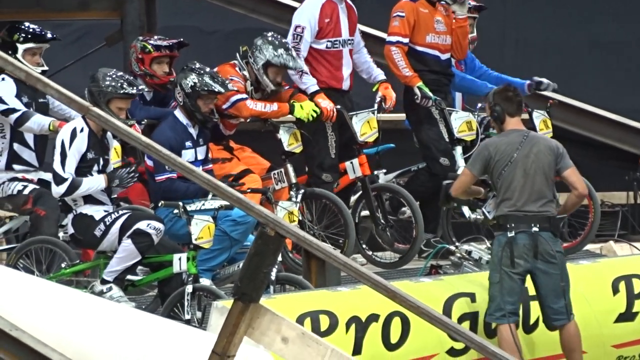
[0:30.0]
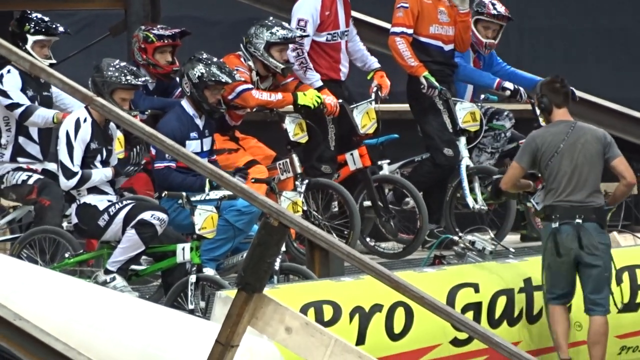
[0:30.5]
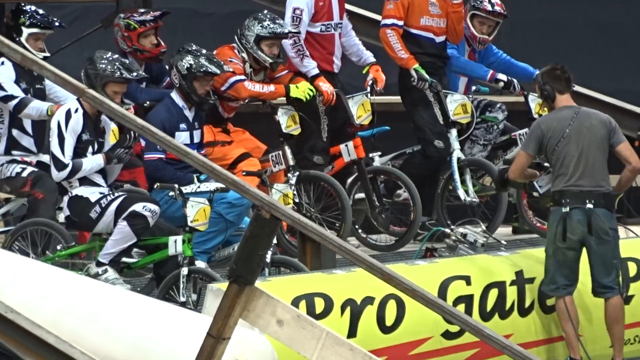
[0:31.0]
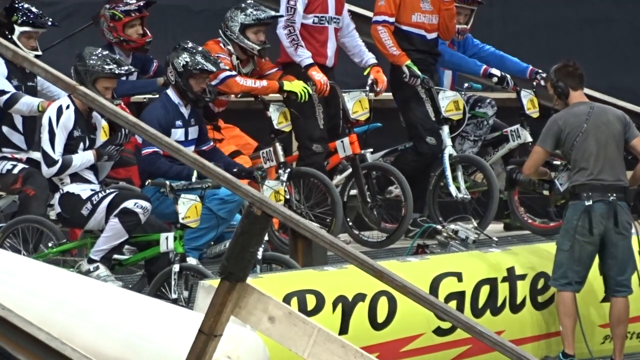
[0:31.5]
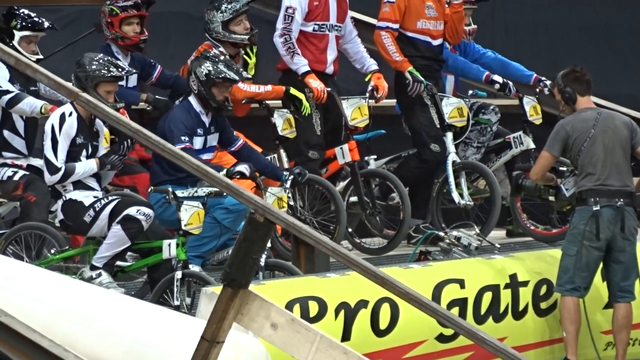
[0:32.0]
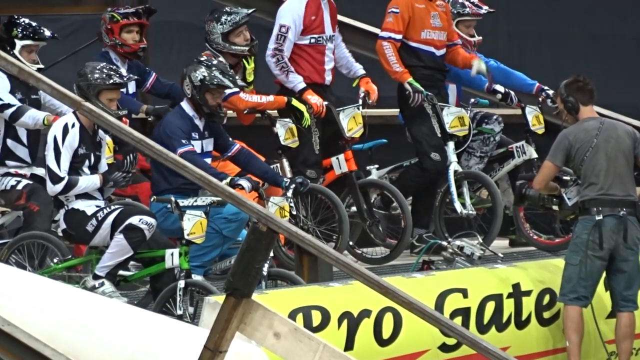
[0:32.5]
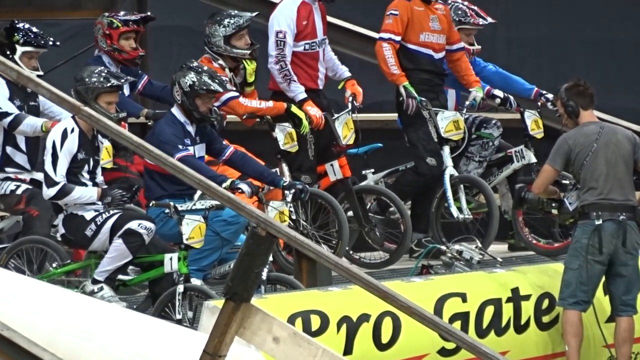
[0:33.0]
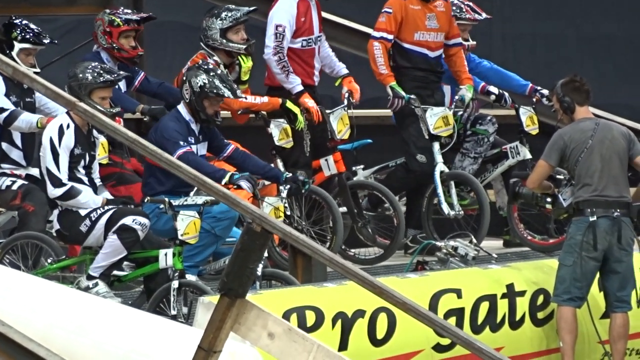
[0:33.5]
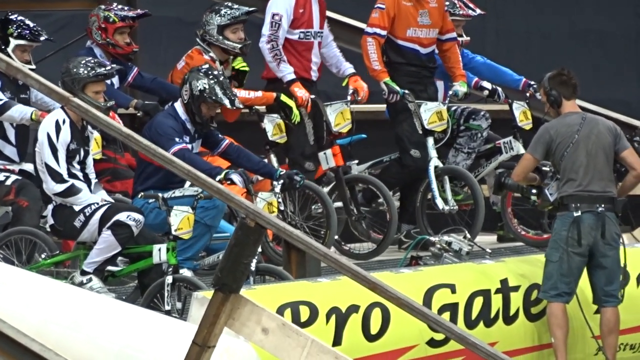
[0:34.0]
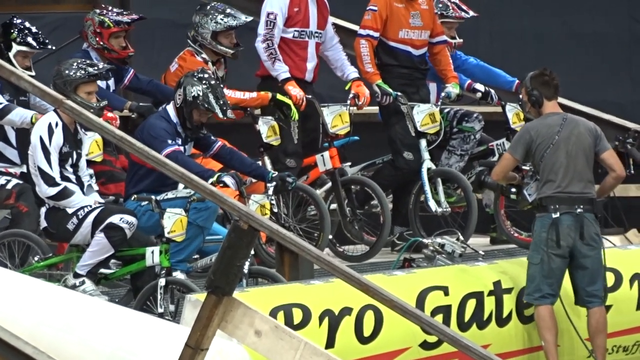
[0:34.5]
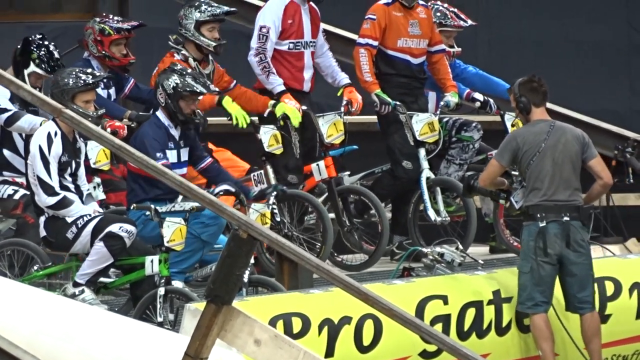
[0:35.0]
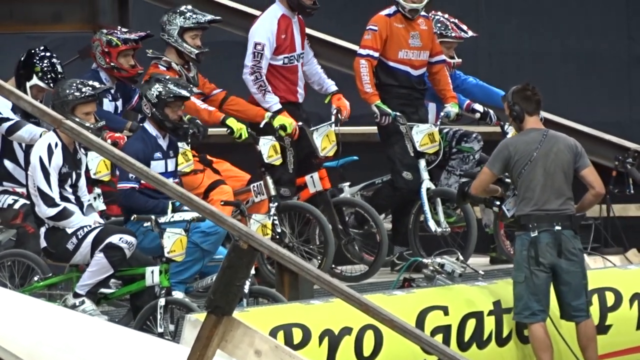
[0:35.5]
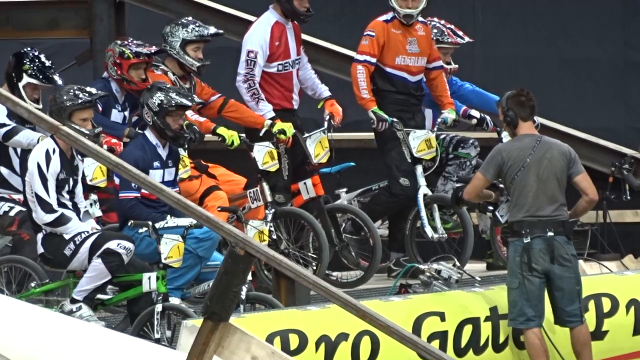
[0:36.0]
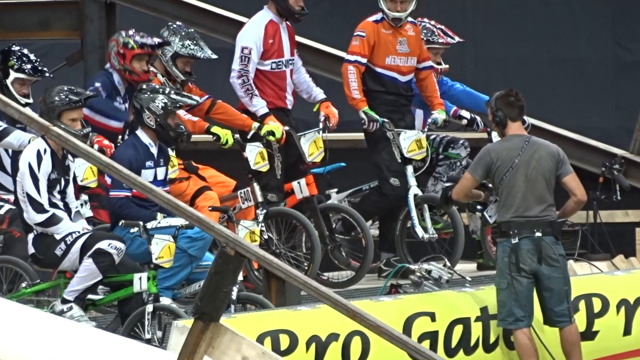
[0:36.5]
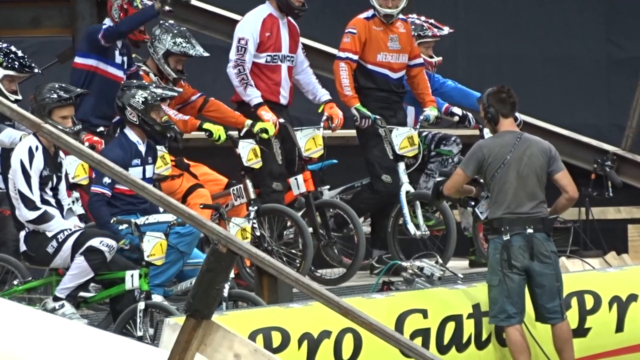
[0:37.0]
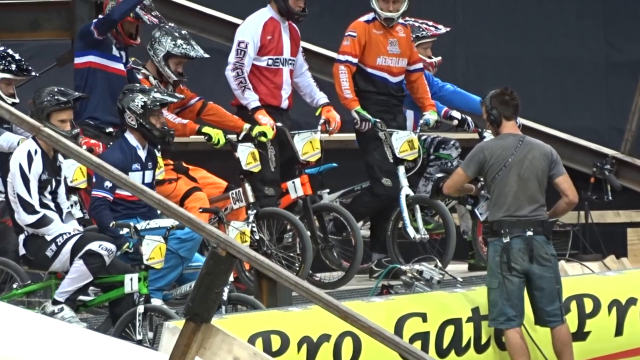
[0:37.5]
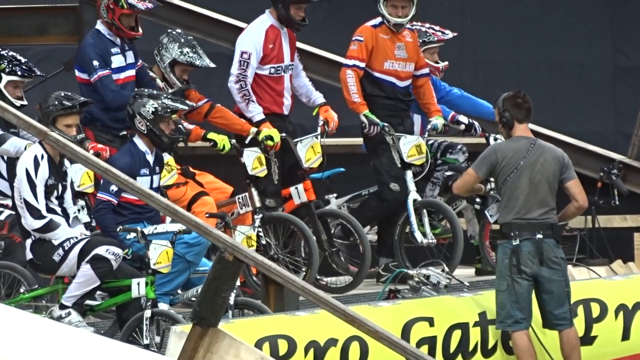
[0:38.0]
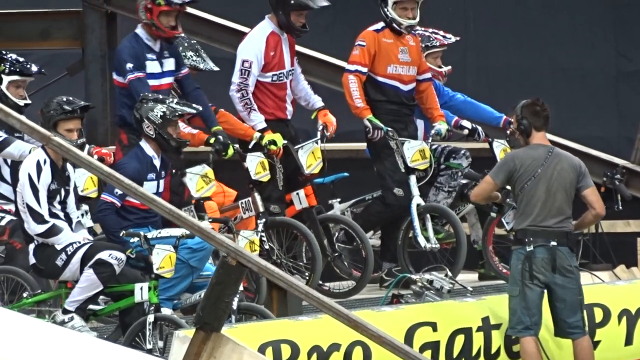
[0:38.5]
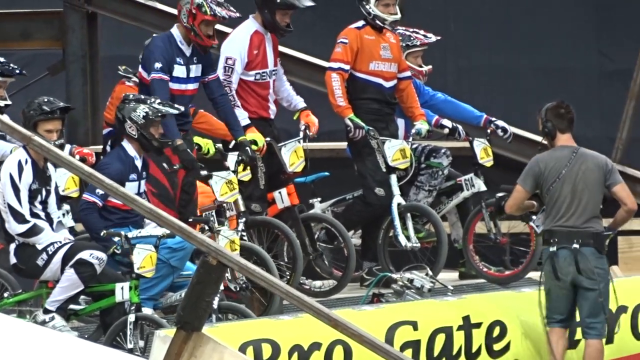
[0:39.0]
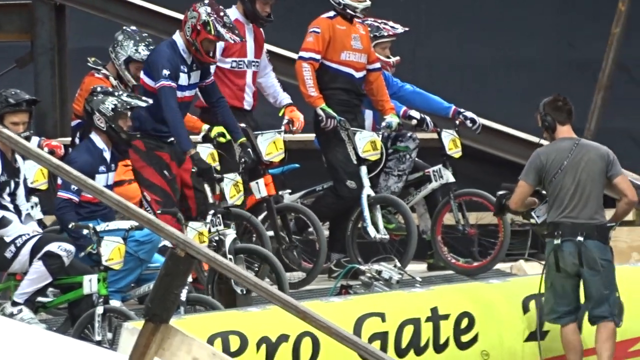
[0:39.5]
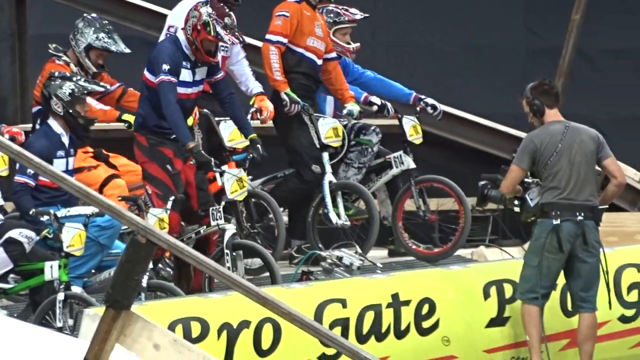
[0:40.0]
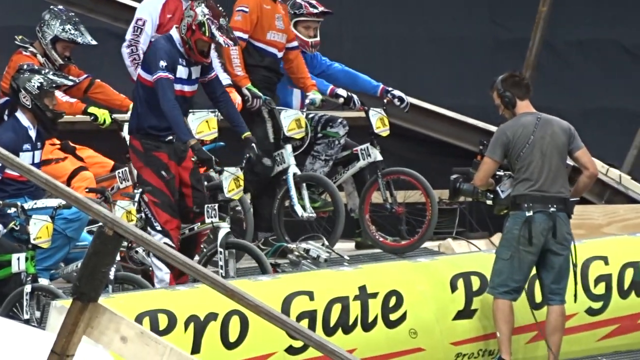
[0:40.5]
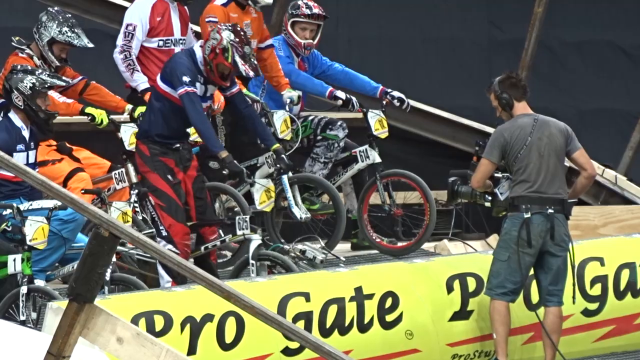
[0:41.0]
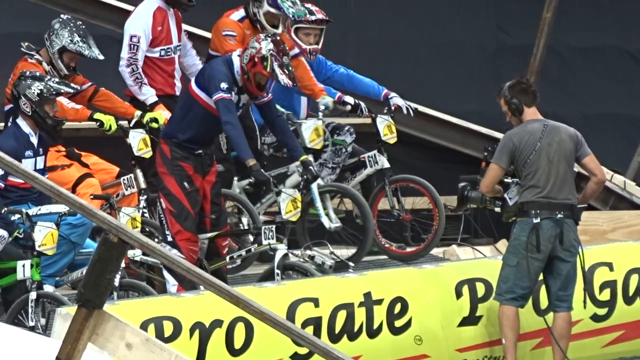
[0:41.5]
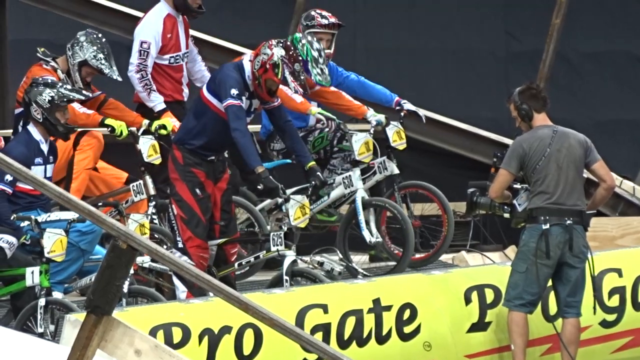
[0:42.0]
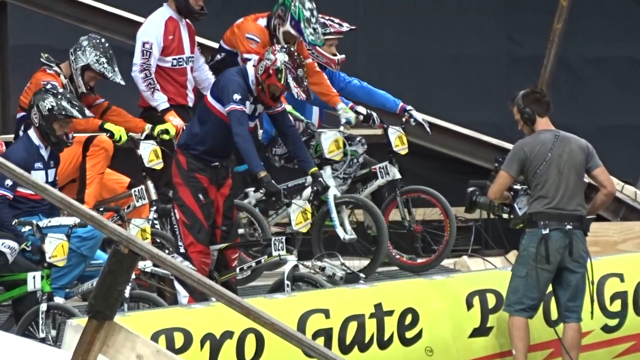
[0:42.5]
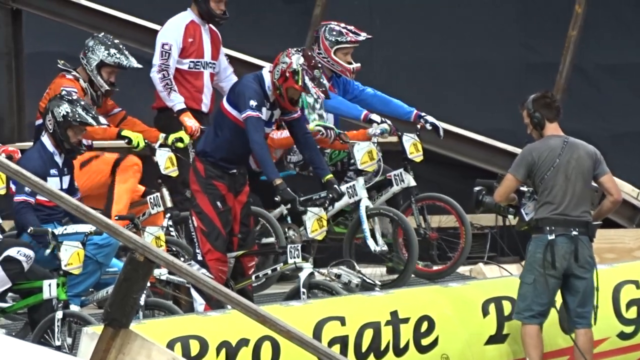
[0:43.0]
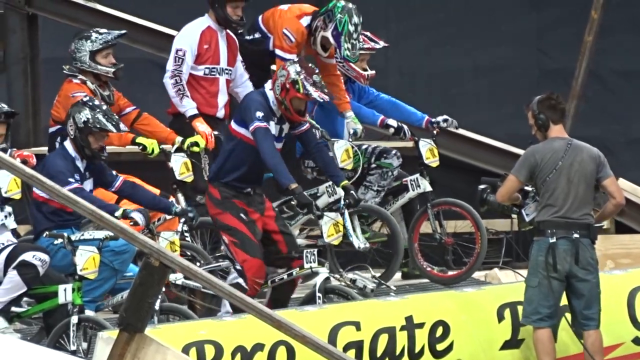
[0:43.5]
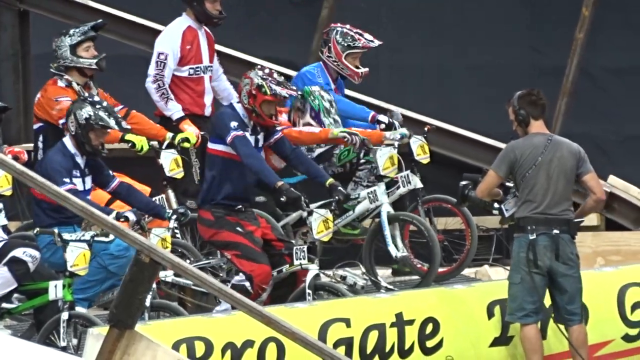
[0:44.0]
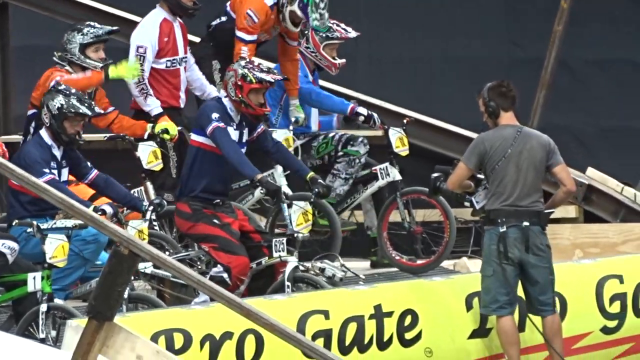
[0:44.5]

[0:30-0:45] The bikers are still preparing to race and appear set up to get going. All nine of them are ready and are standing there waiting for the start. It appears to be a final or end-of-championship race. The riders all look very focused, and the cameraman is still in front of them.